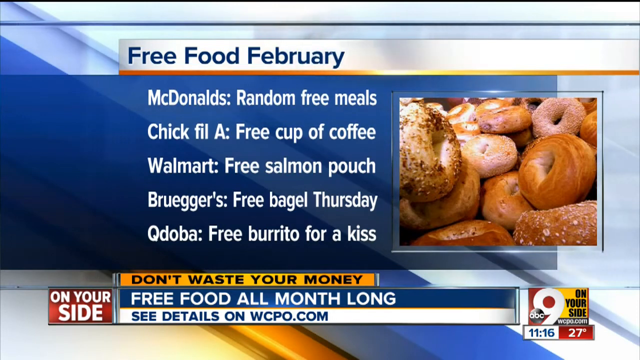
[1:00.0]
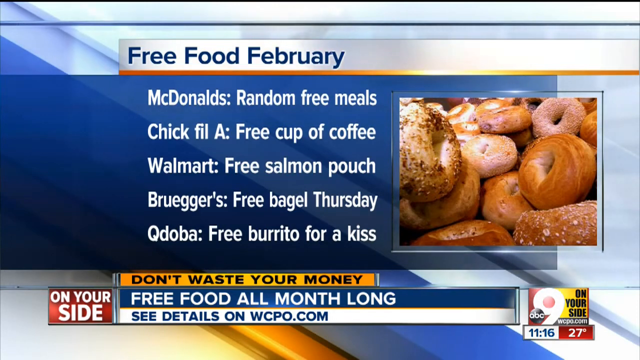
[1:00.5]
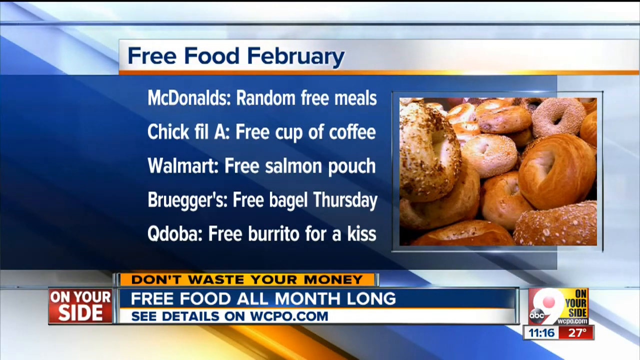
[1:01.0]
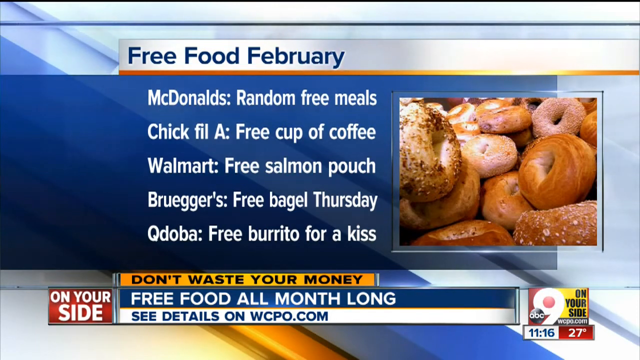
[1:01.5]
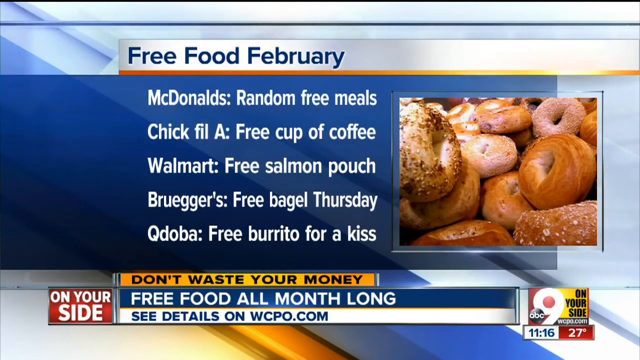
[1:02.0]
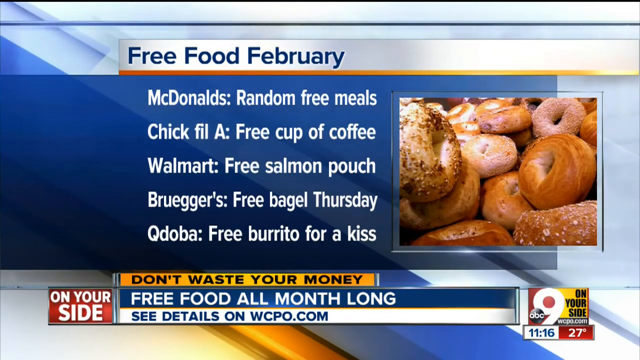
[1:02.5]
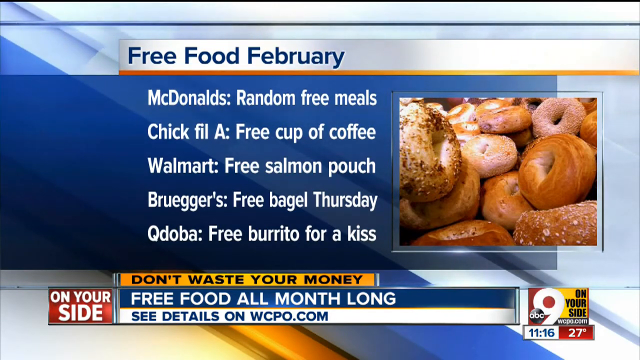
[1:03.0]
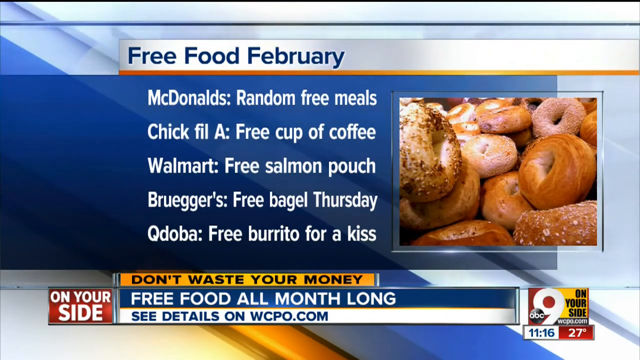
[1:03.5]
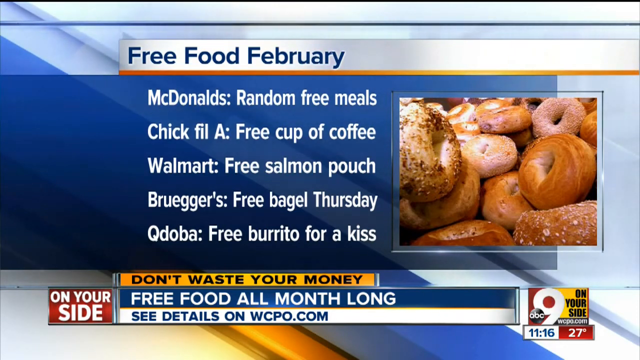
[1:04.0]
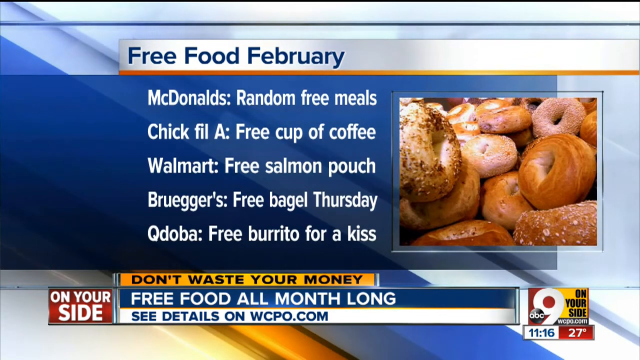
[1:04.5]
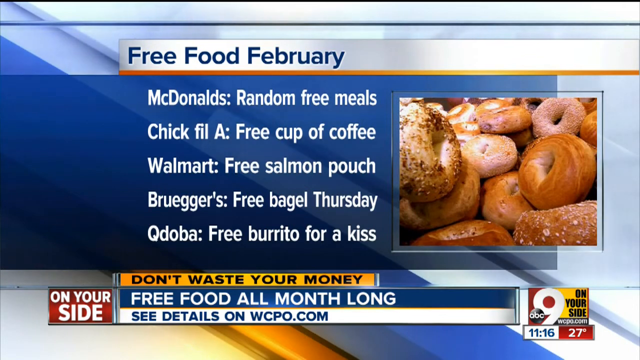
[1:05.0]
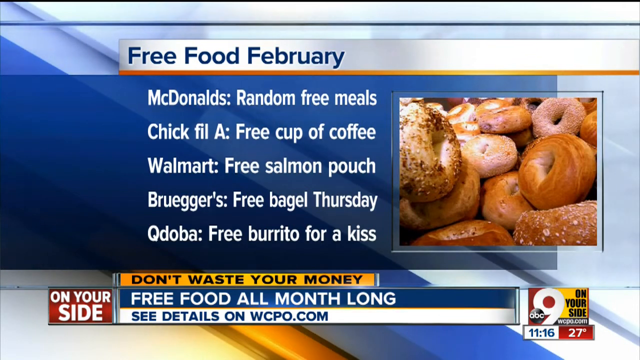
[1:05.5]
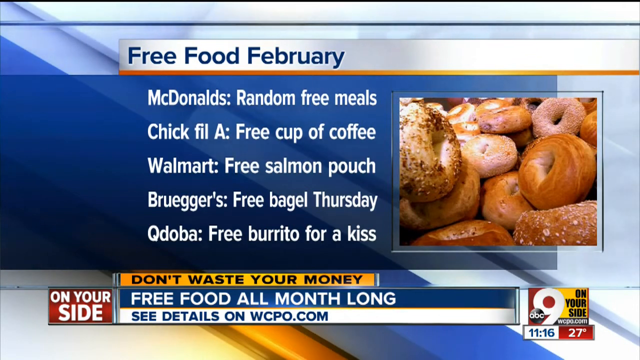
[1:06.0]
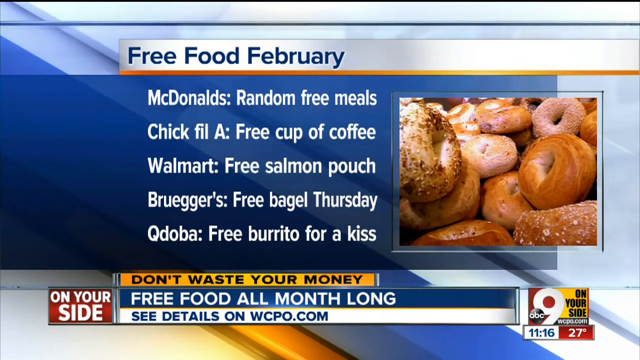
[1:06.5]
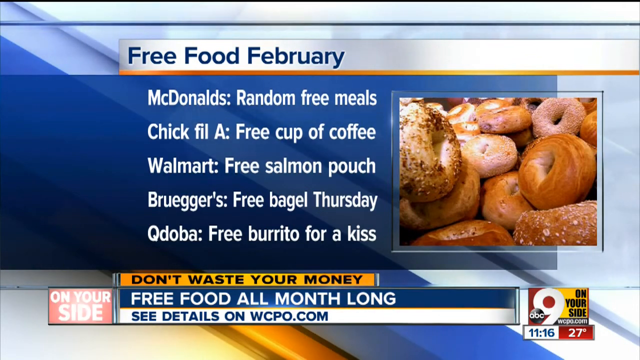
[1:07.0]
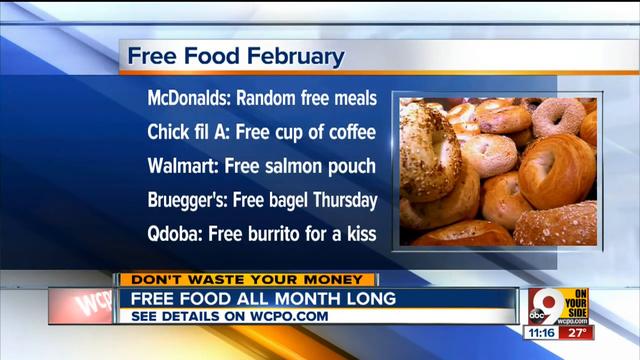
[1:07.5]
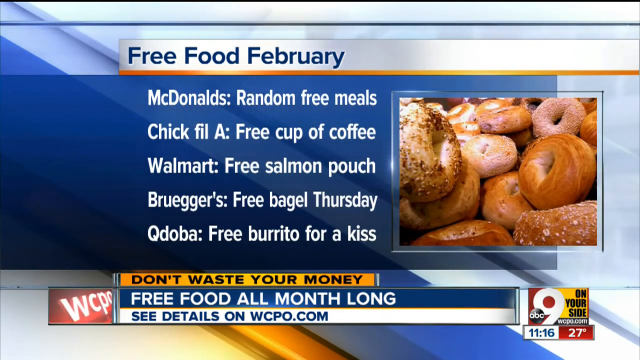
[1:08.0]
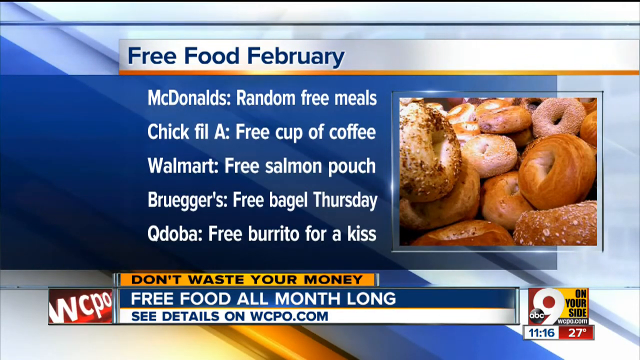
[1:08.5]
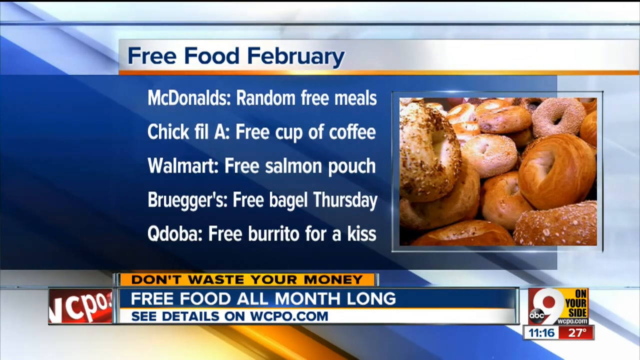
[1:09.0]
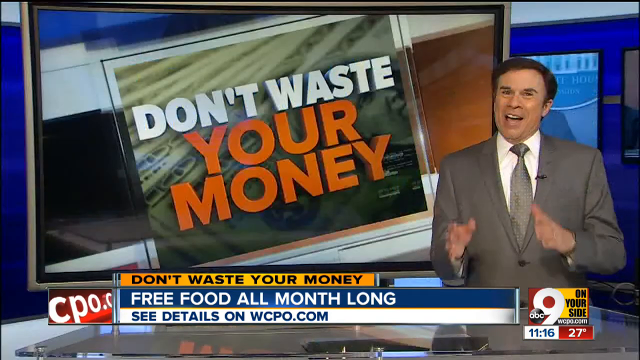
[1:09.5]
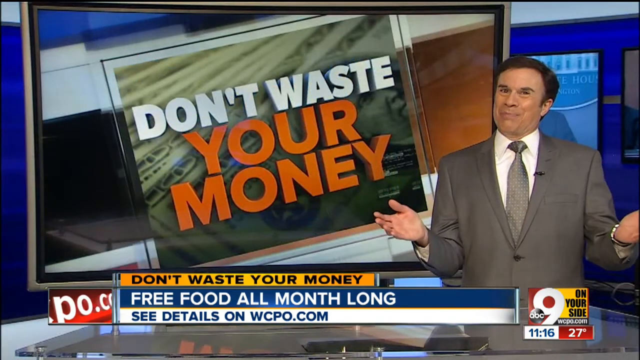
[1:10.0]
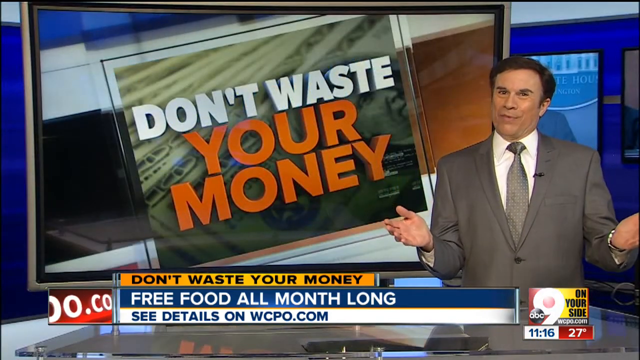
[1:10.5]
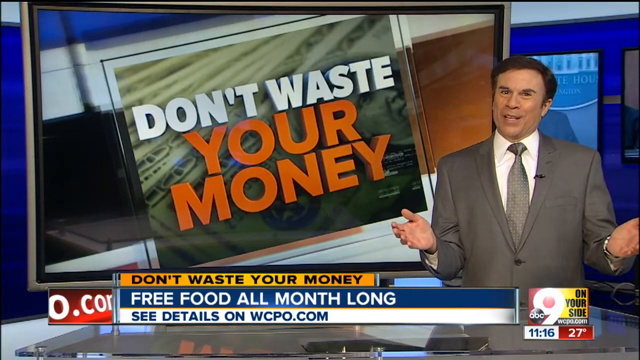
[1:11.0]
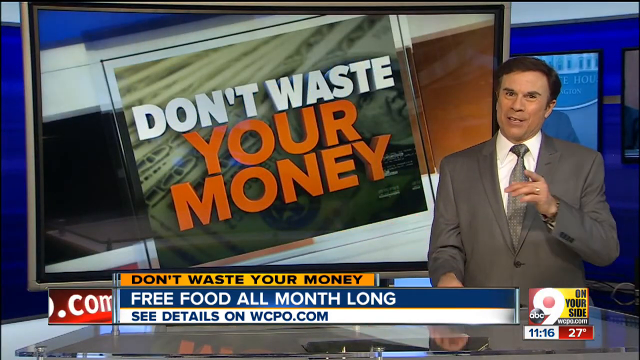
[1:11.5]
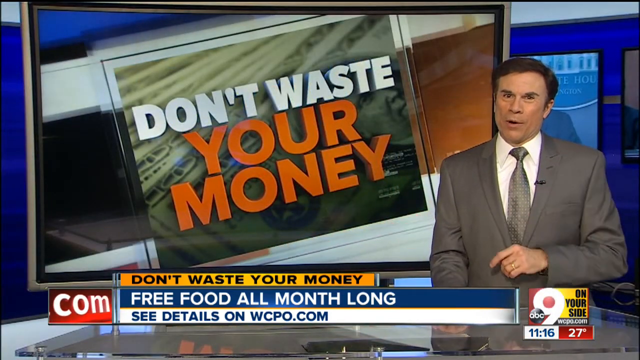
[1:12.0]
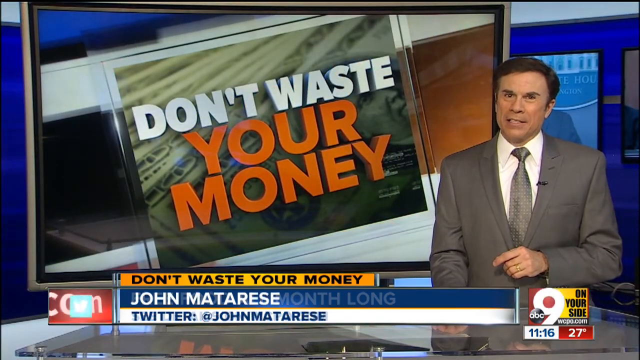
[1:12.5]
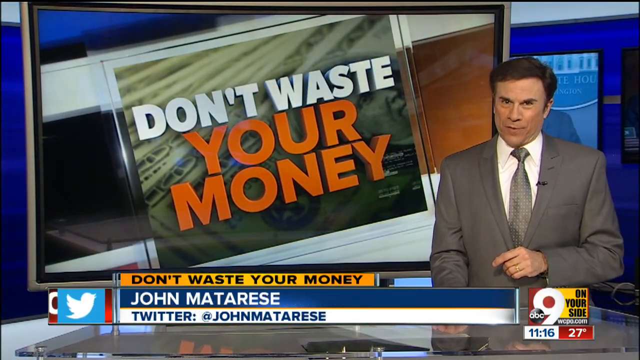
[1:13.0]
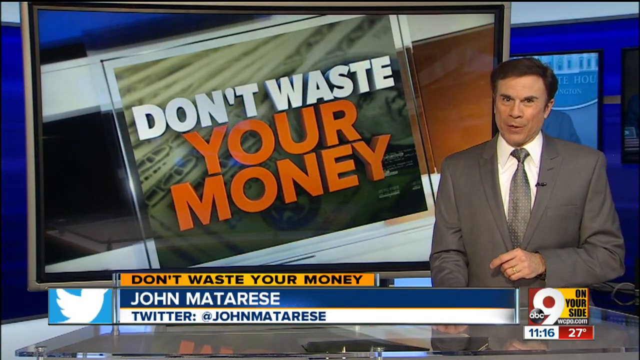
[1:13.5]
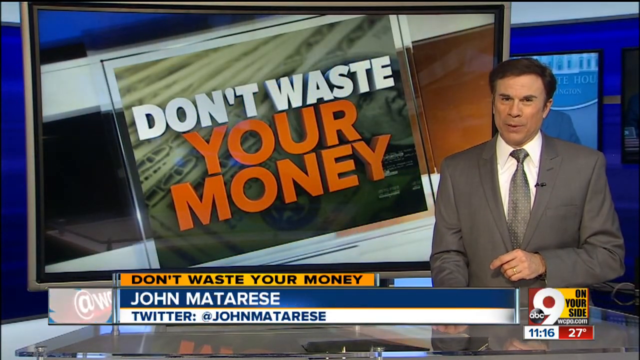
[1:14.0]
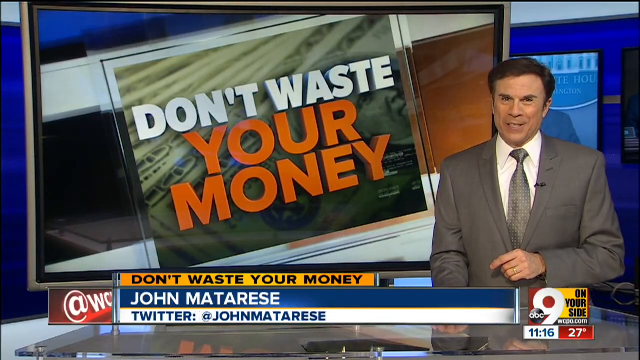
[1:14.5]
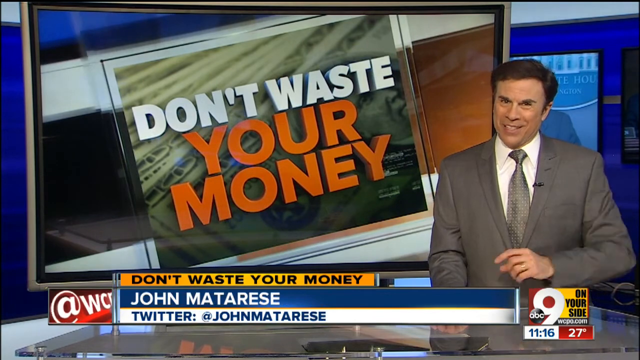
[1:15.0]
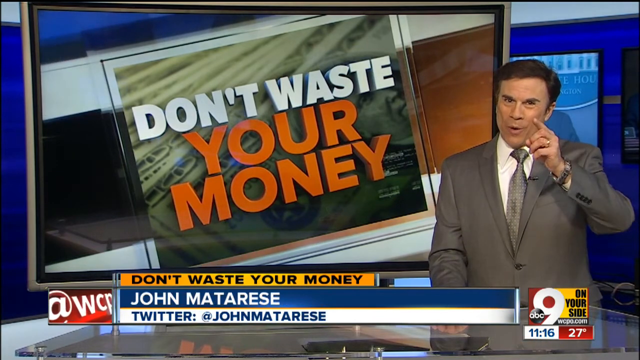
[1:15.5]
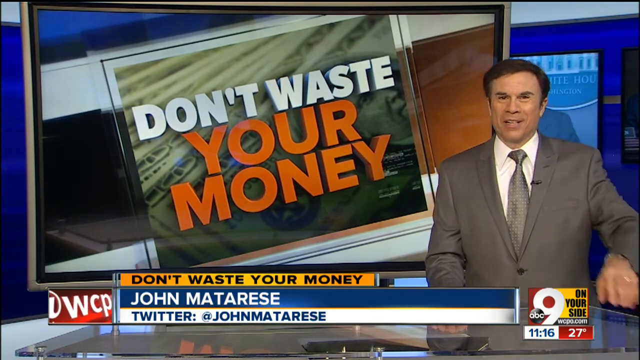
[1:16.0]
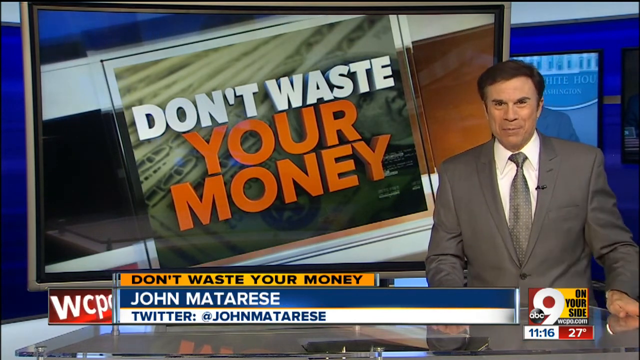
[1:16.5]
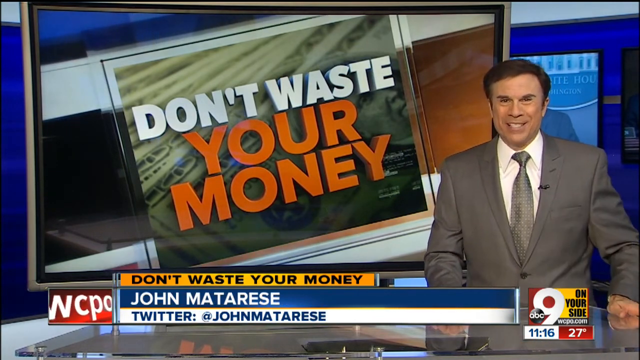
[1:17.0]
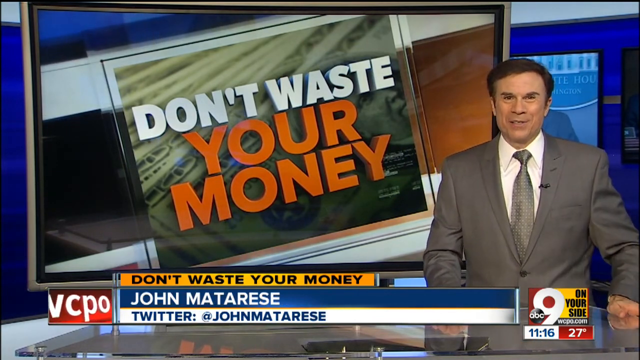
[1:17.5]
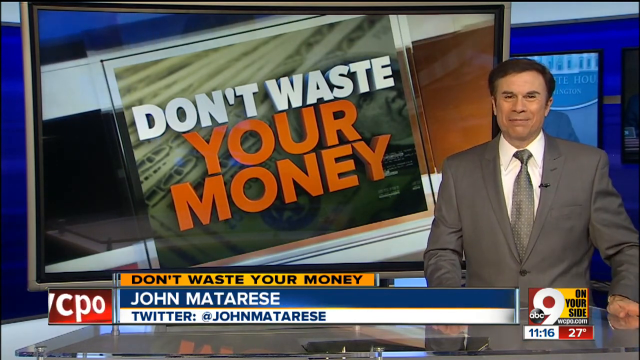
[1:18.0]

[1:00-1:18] The text "Don't waste your money" appears. A white woman, apparently old, dances and looks happy. A man wears a white suit, a white shirt and a gray tie.